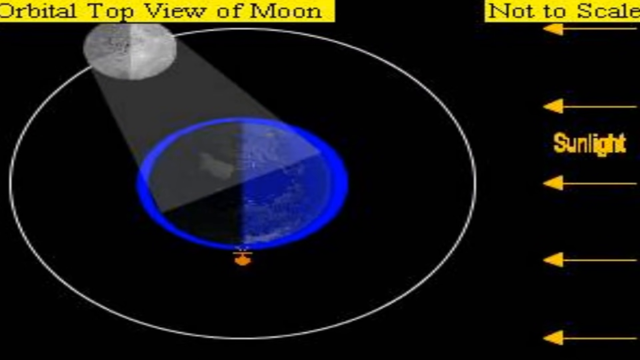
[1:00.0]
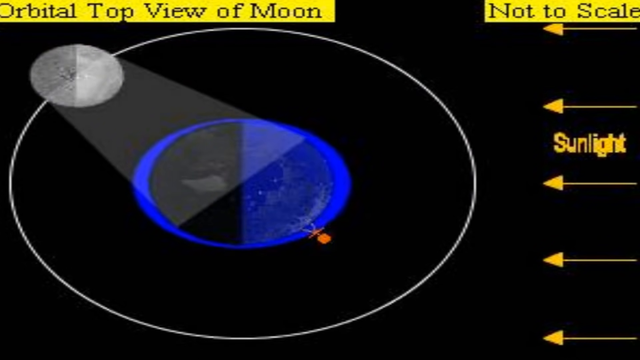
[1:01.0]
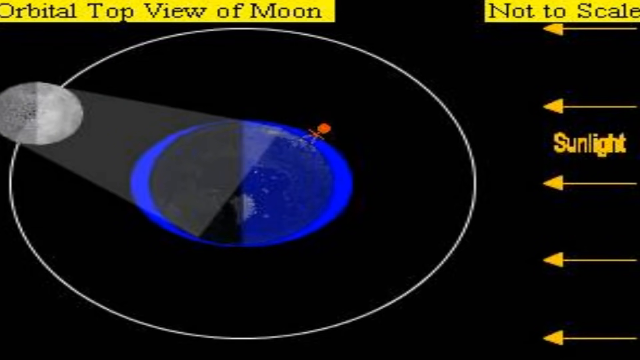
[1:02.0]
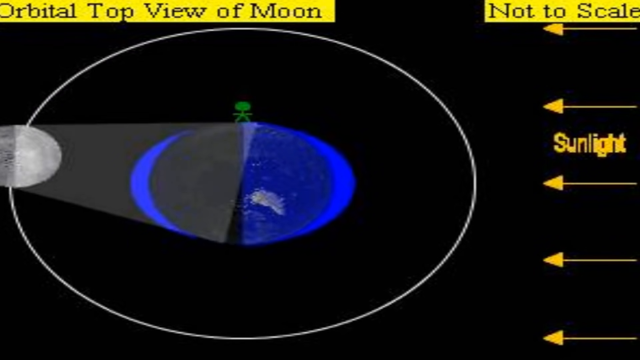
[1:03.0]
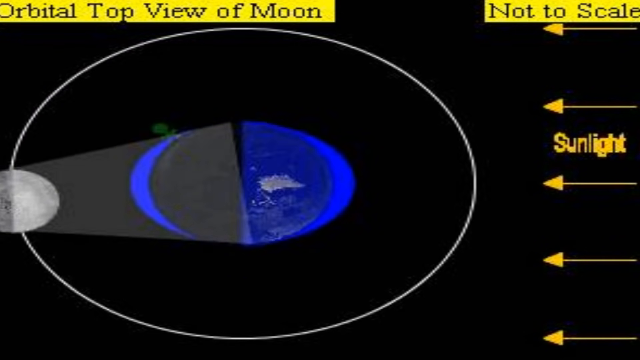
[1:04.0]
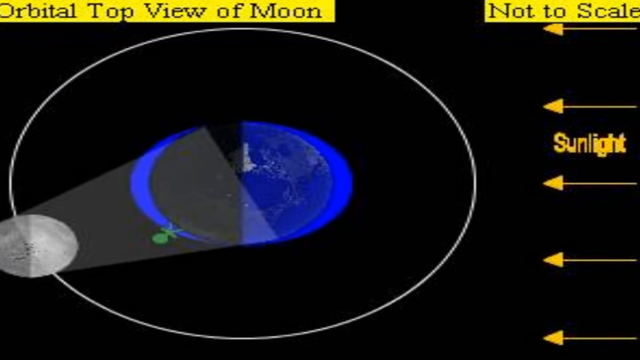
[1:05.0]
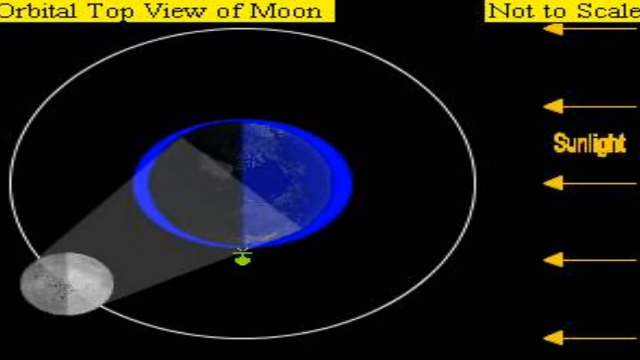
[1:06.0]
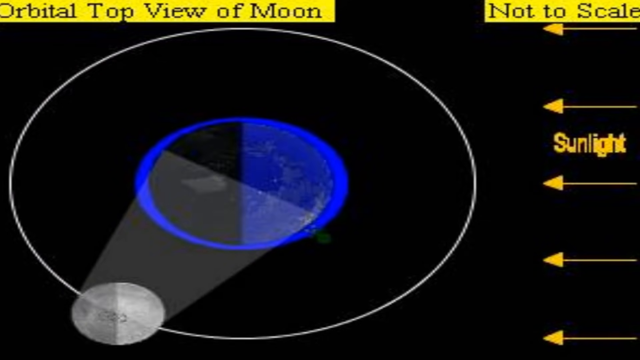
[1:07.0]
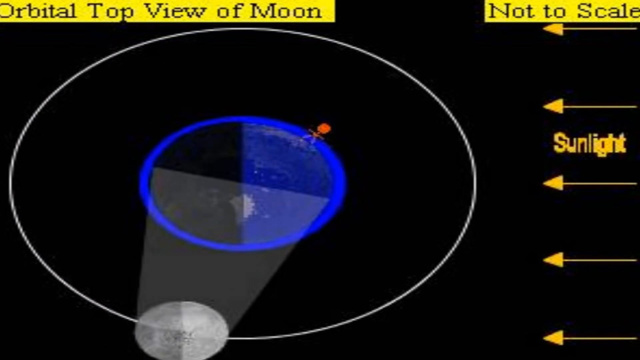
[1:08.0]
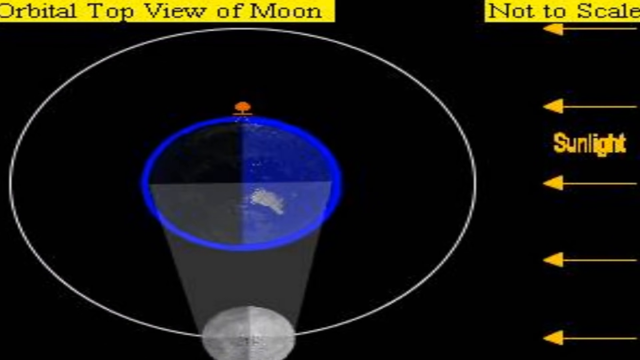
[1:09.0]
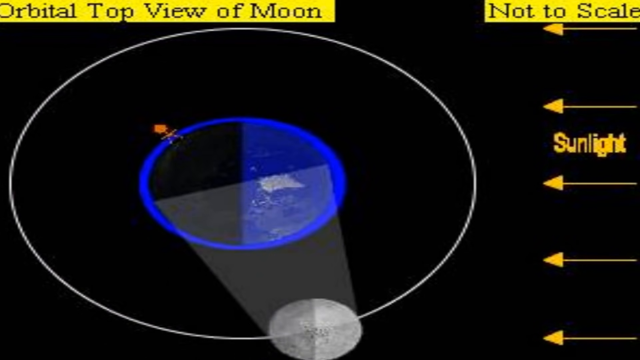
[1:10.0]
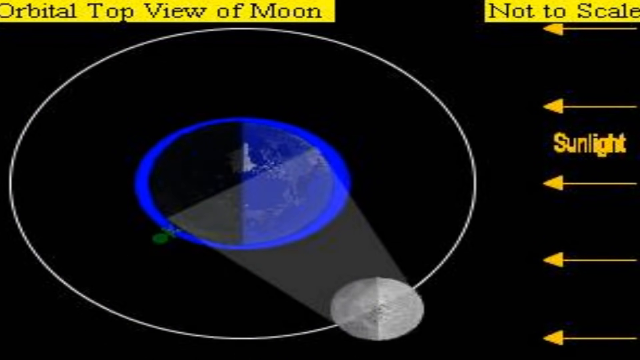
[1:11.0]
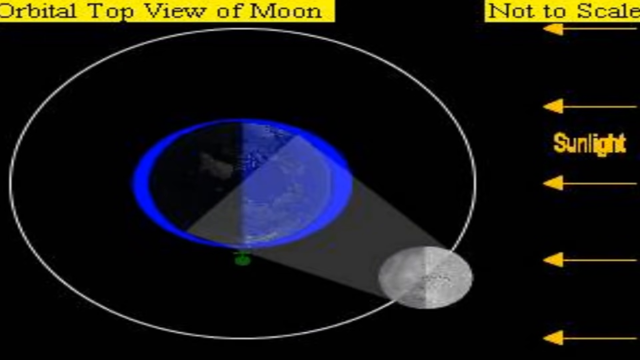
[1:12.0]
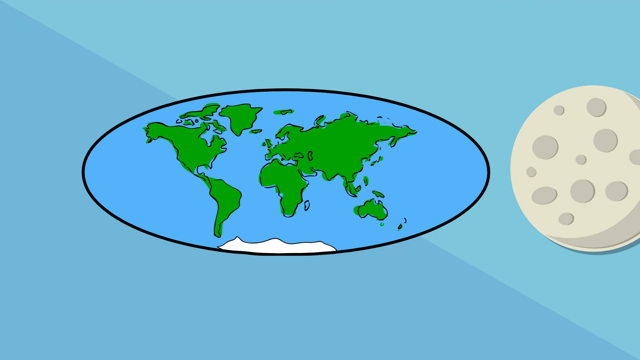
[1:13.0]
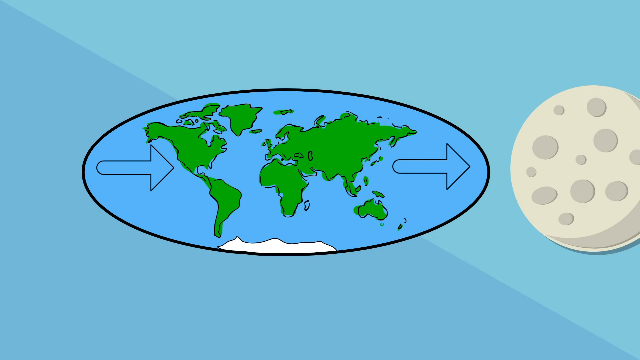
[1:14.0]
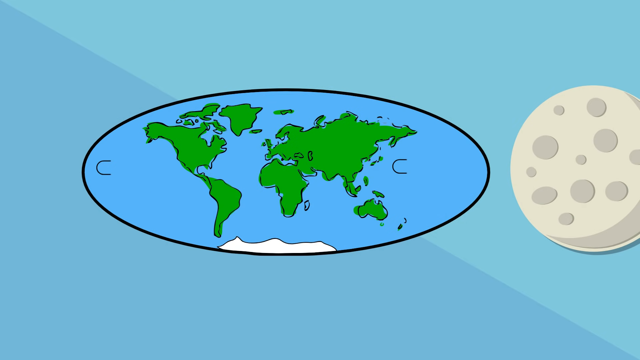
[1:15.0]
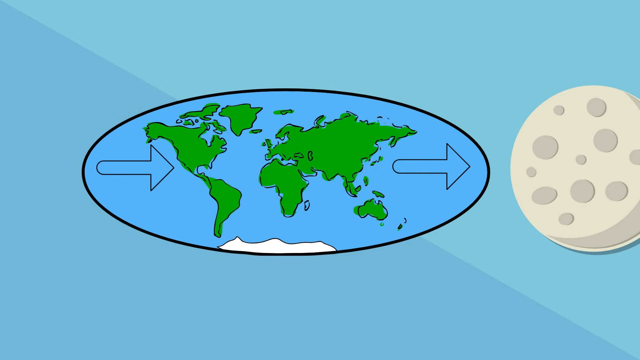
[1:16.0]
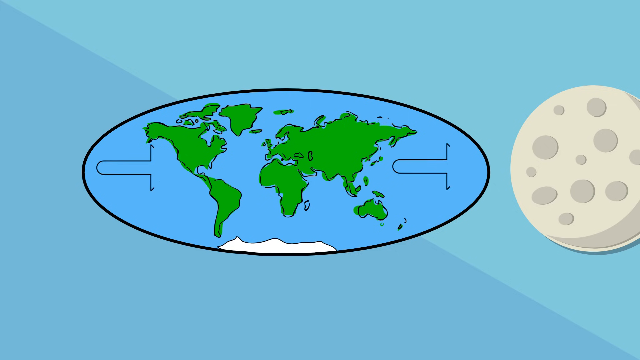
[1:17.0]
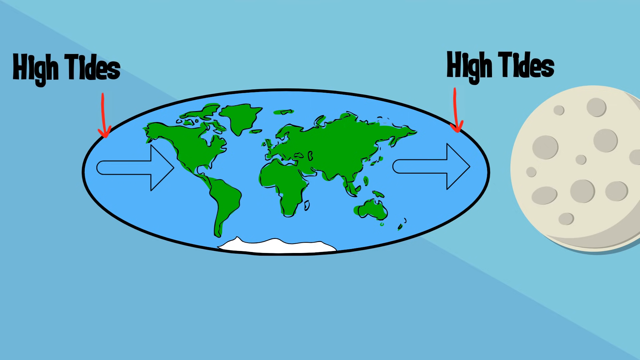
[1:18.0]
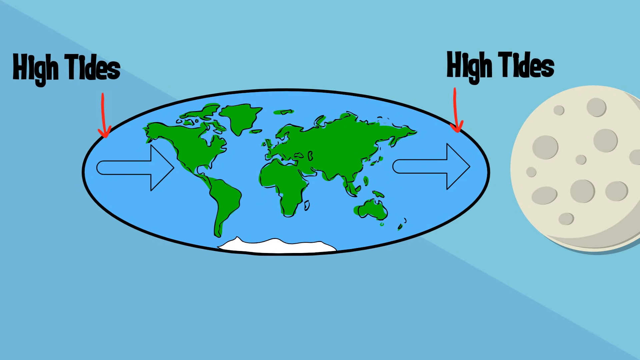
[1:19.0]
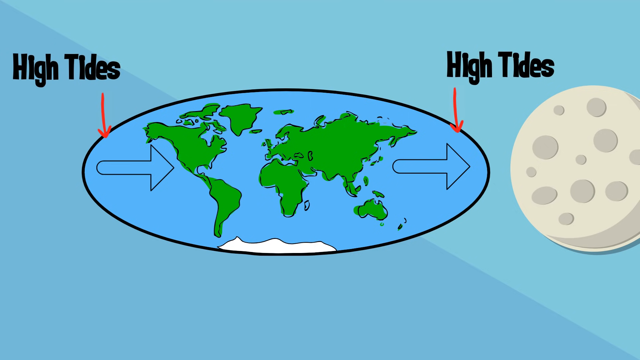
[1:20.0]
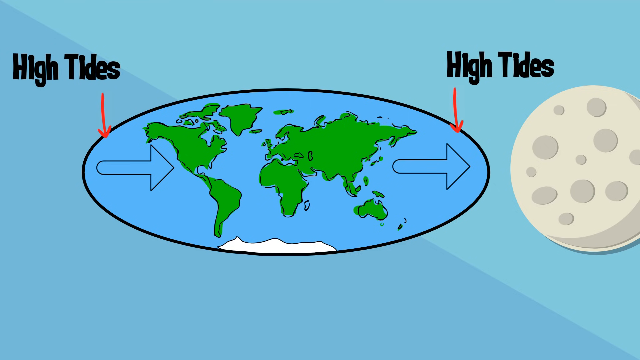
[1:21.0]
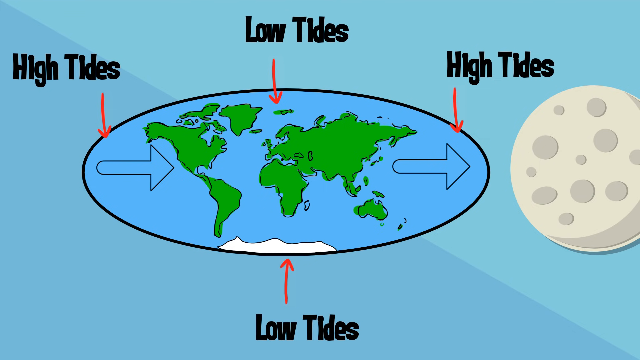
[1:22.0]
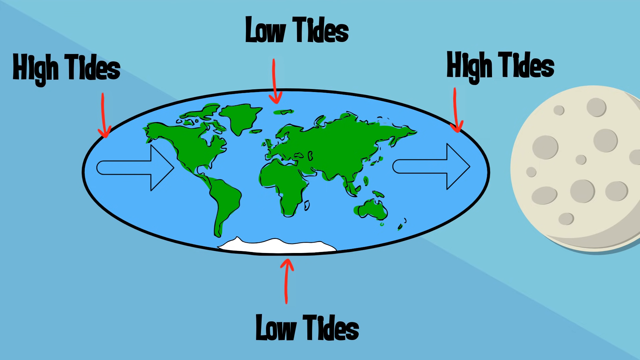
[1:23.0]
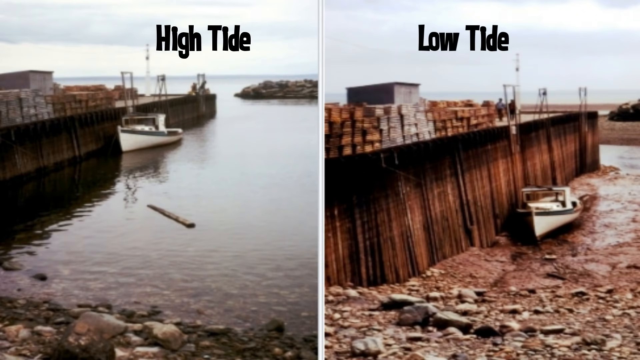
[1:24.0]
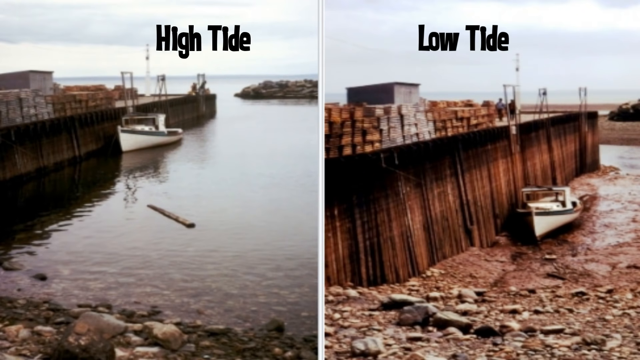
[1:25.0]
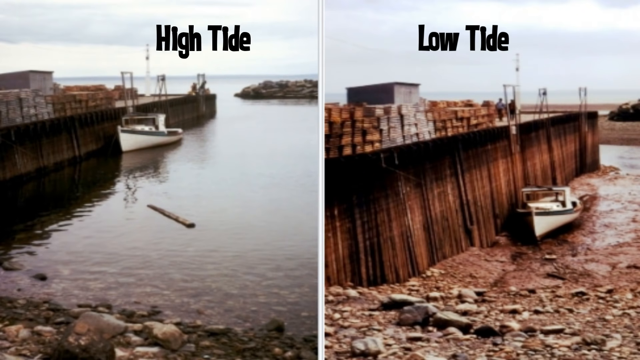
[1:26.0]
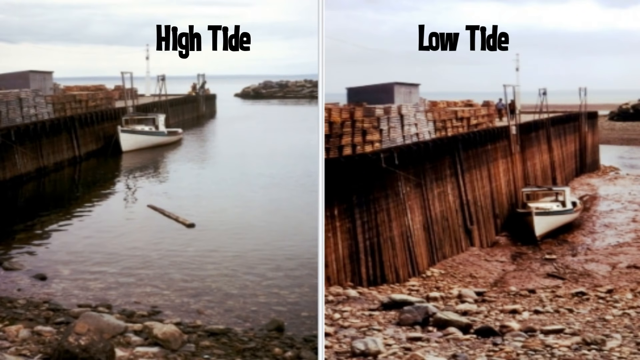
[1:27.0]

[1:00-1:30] The simulation continues, with the earth rotating and the moon circling around it. The right half of the earth is blue and the left half is black. The moon, which started in the top right corner, progresses all the way to the left side. As the moon faces the earth, a light gray shaded area shines down upon the earth. The moon then goes downward and moves to the right, completing its path, while the earth moves very fast, until the moon is at the bottom right of its orbit. The scene changes to the map projection of the Earth as before, with the two arrows on its left and right sides blinking and pointing to the right, toward the moon. They are labeled "high tides". More captions appear at the top and bottom that say "low tides", pointing to the Earth's South Pole and North Pole areas. The scene changes to two example images: a high tide on the left and a low tide on the right. On the left there is water, with a boat floating next to a dock. On the right there is no water; the boat is still next to the dock but on the ground, and the dock appears taller because there is no water.